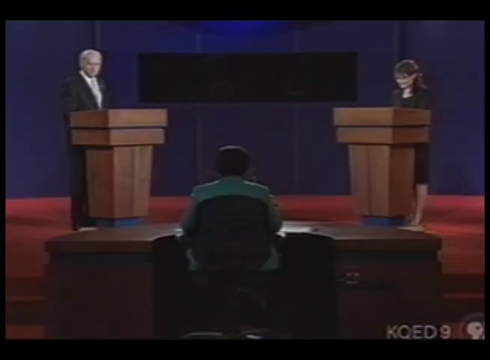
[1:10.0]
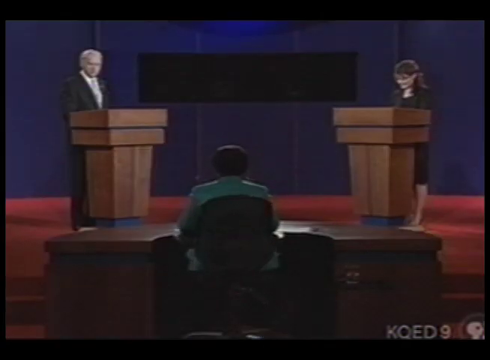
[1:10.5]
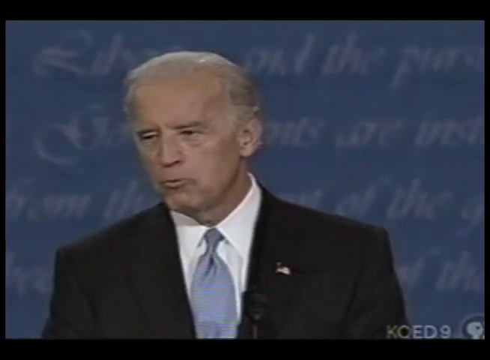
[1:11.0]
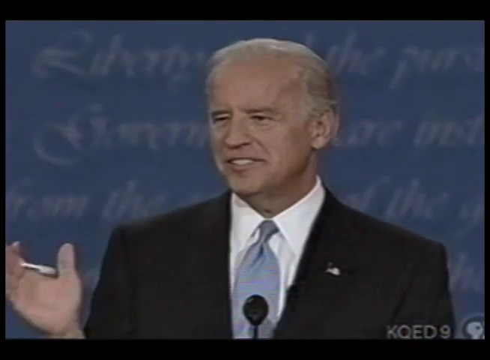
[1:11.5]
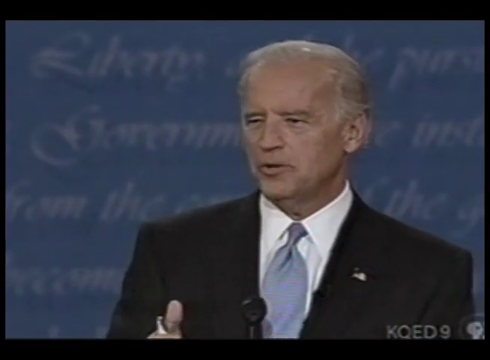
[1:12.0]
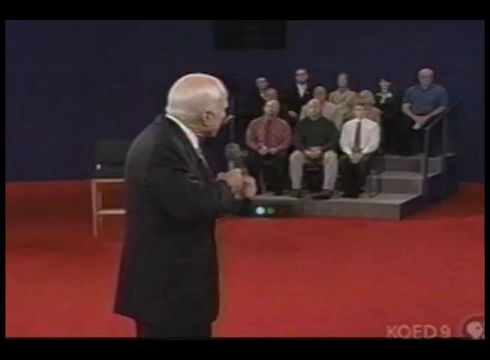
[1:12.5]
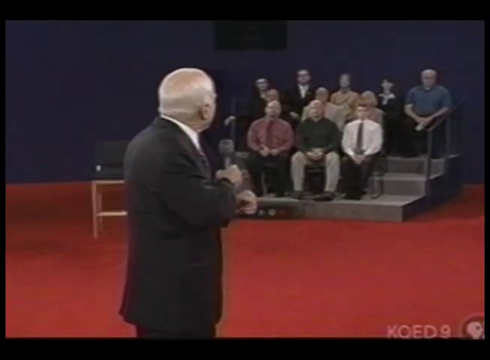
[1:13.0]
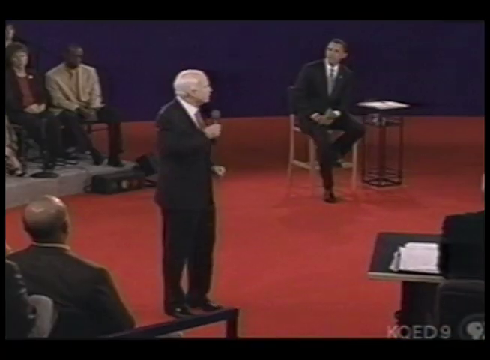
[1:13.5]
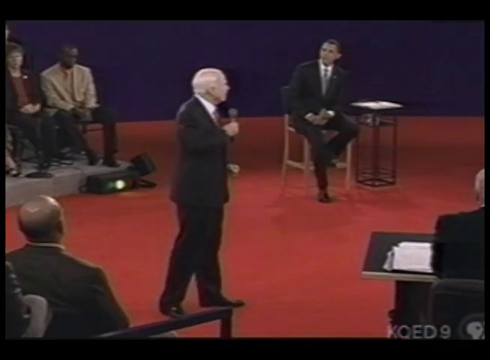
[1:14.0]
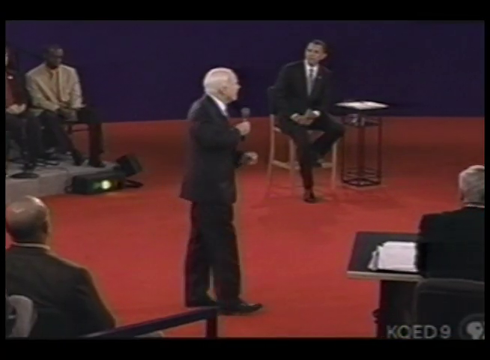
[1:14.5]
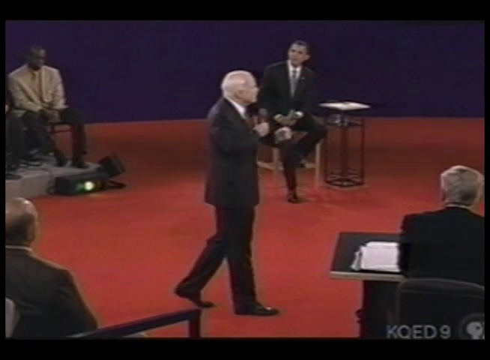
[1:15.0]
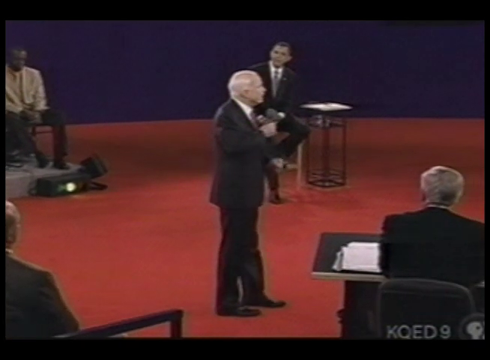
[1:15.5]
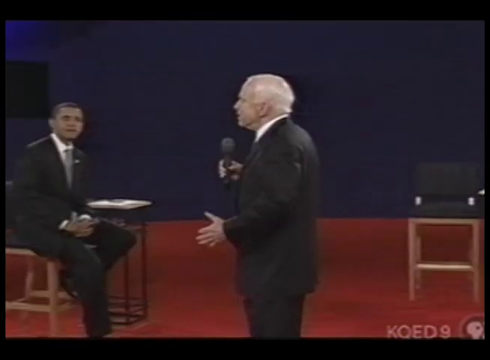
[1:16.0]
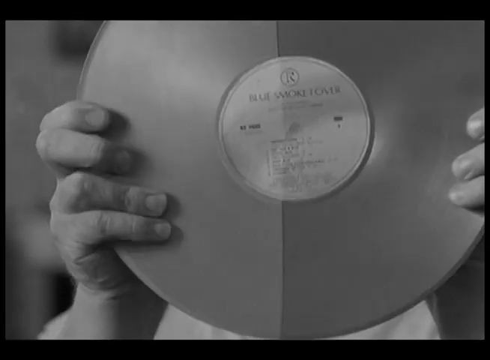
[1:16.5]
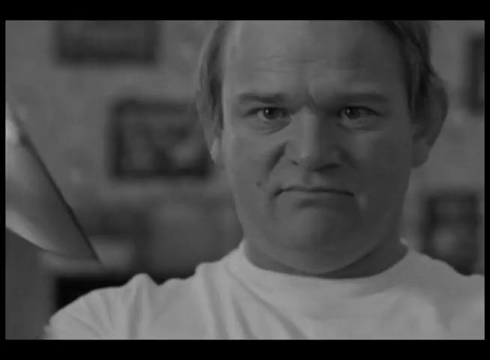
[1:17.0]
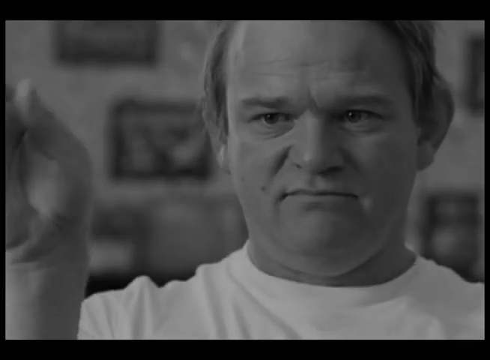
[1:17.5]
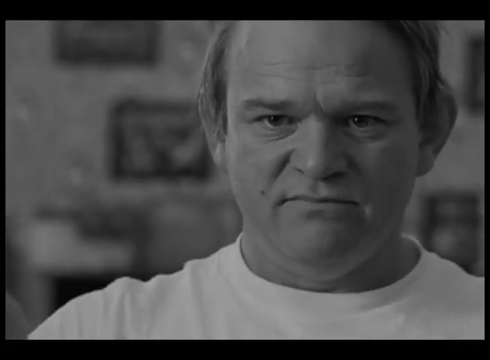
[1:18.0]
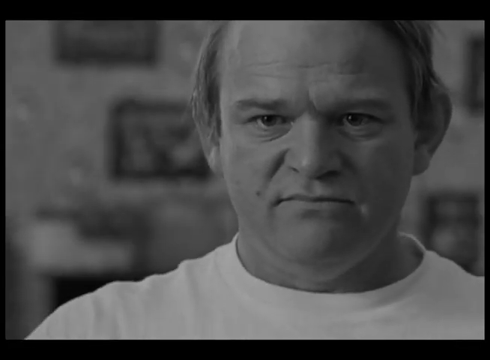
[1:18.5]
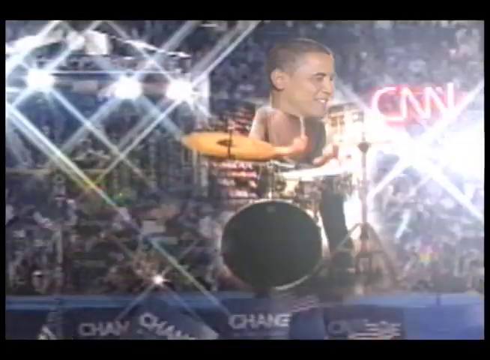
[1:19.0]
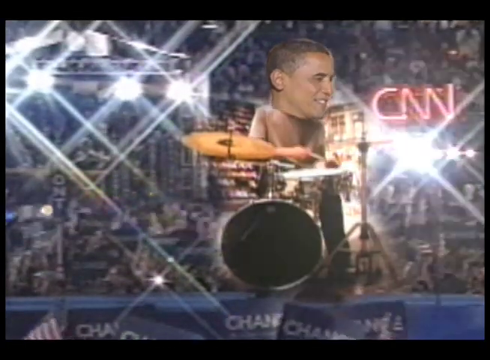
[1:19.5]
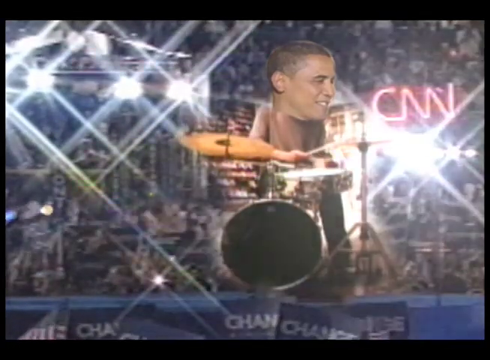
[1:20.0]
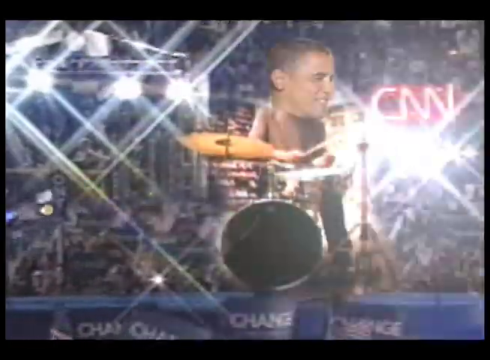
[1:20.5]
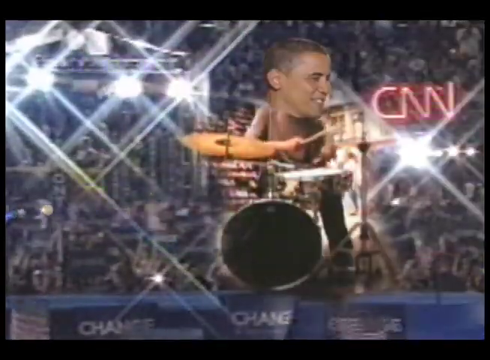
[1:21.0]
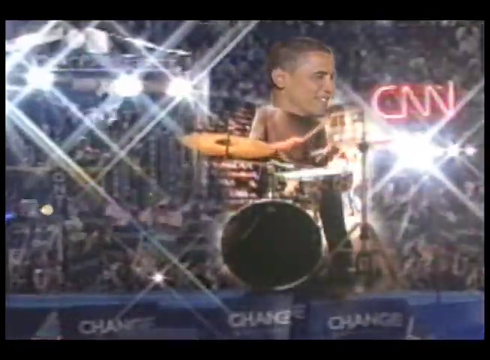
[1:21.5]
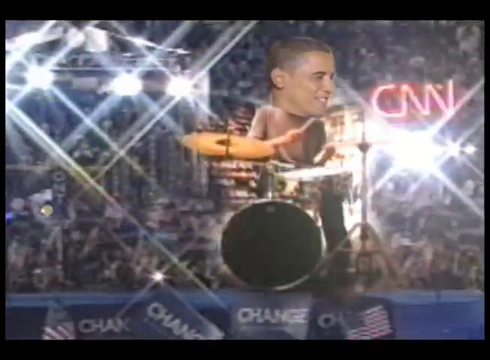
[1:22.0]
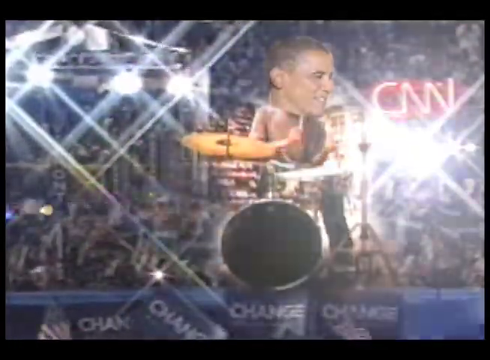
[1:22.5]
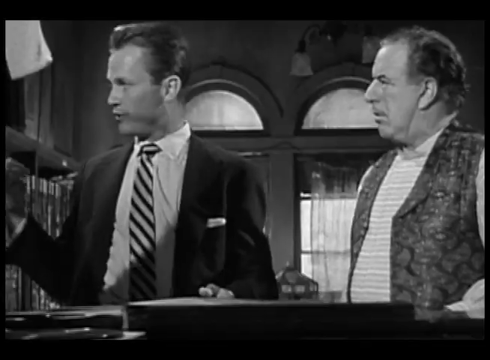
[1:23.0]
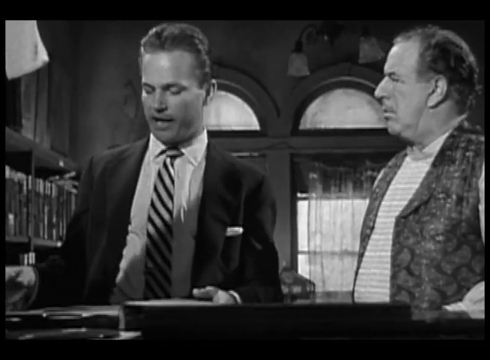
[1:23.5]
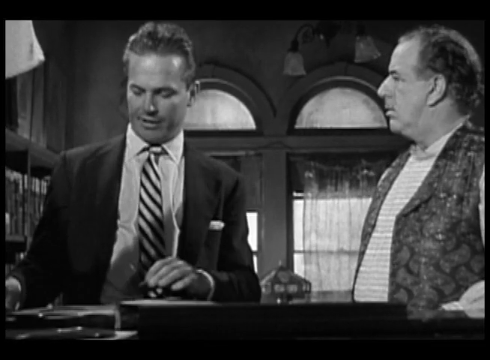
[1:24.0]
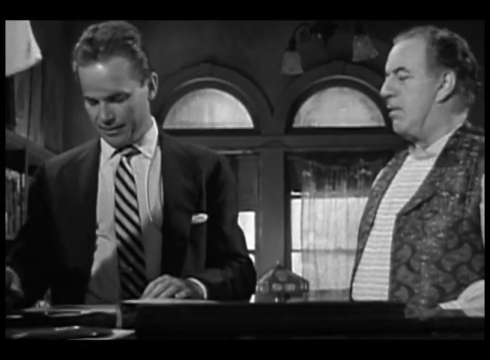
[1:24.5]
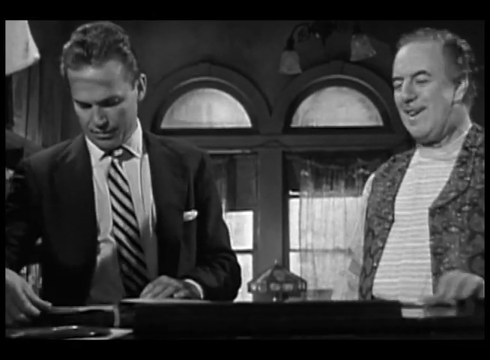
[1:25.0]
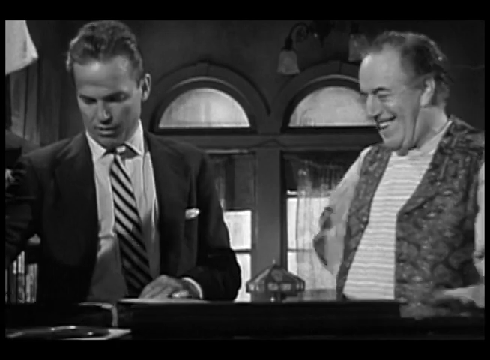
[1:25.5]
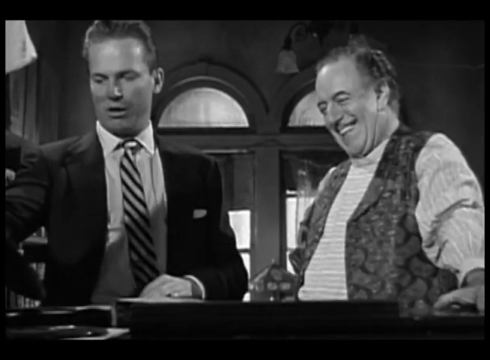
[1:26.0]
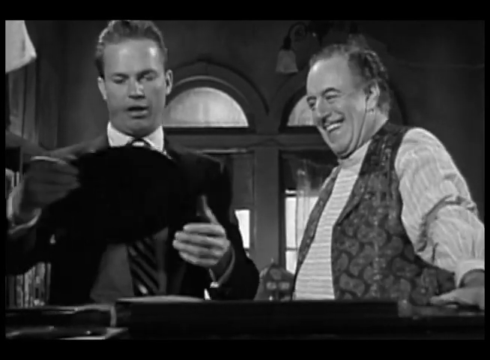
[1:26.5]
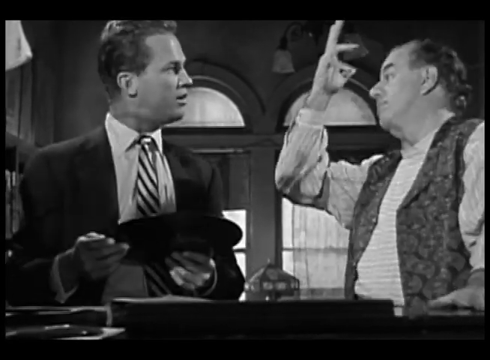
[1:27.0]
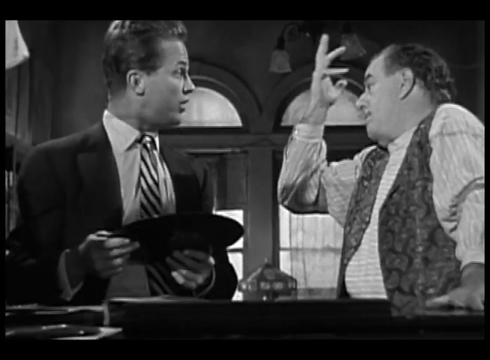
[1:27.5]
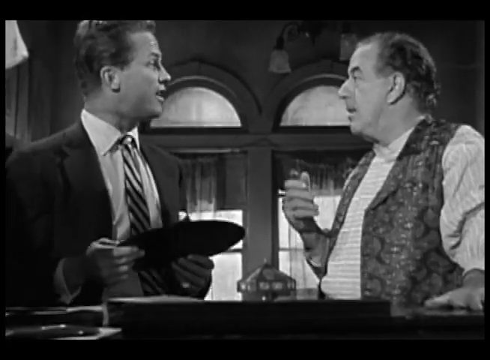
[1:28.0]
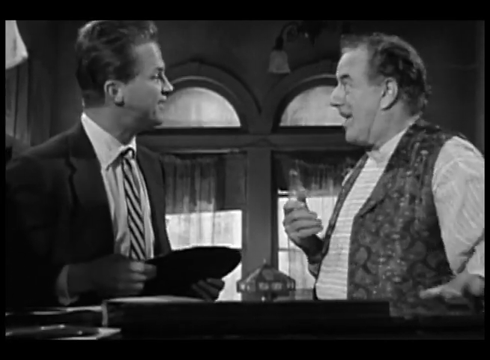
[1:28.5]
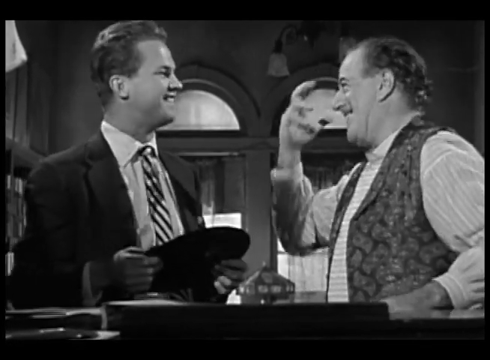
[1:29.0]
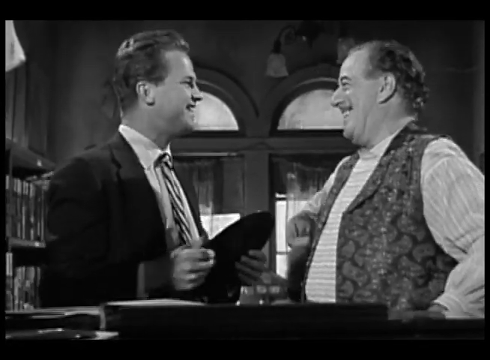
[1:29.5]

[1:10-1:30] Two politicians, apparently Sarah Palin and Joe Biden, debate at a podium. The video cuts back to Obama playing drums, a large Obama head superimposed over the drummer, with the Democratic National Convention crowd in the background. After Joe Biden at the debate podium, John McCain walks around a red-carpeted town hall setting, talking with a microphone. A man from an old-fashioned film, against kind of a black-and-white background, breaks a record disc in half and then looks at the camera. The video cuts back to the fake Obama playing drums, then to an old-fashioned clip of two men talking with one another, one of them holding a record, which he then breaks. These clips alternate with the drummer Obama and with various formally dressed politicians in debates and town hall settings, holding microphones and apparently answering questions.